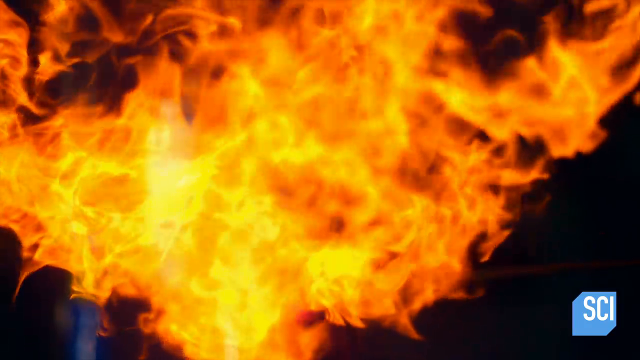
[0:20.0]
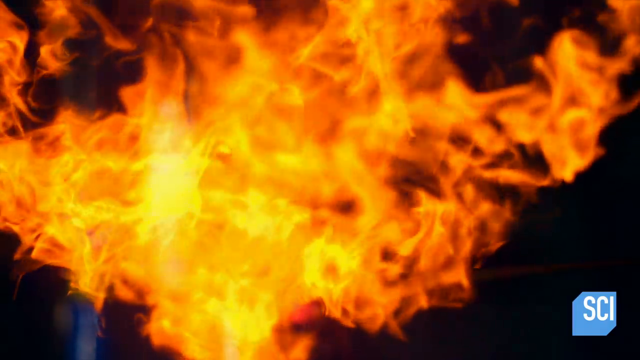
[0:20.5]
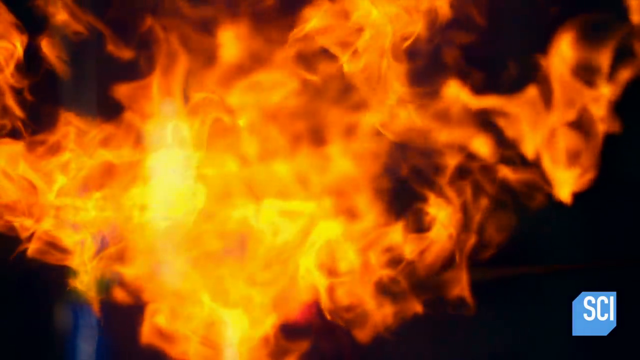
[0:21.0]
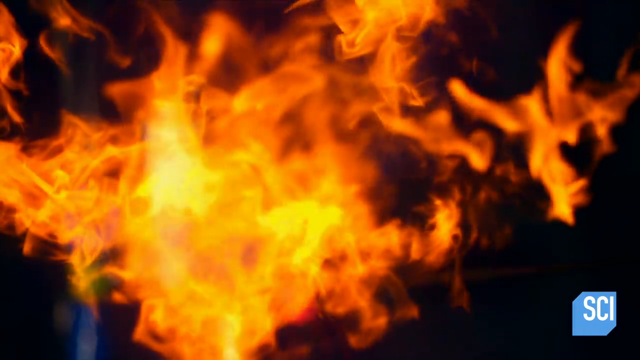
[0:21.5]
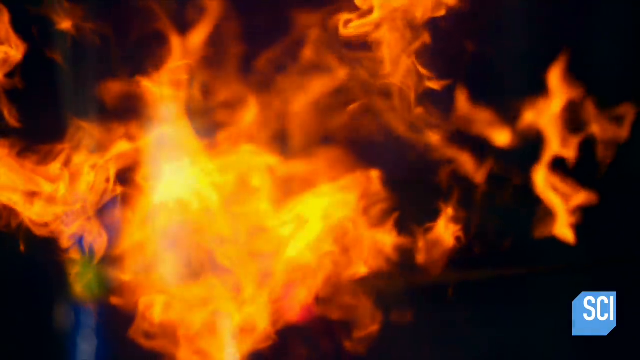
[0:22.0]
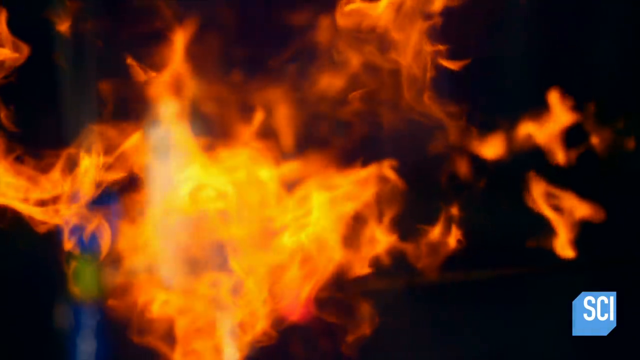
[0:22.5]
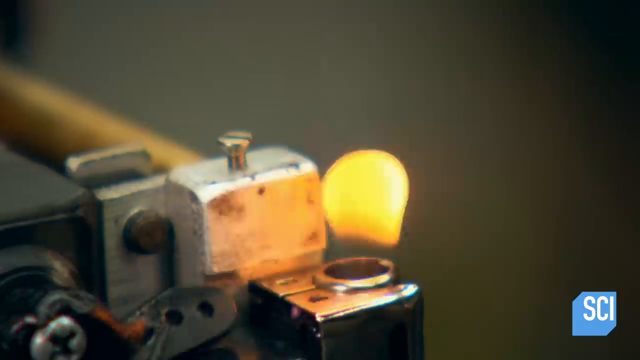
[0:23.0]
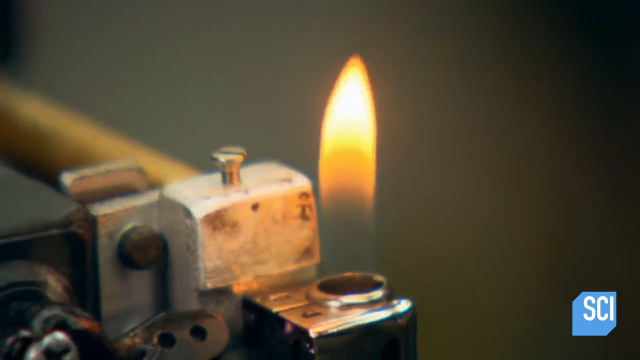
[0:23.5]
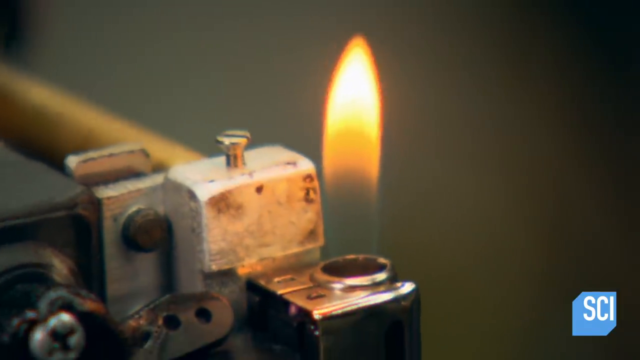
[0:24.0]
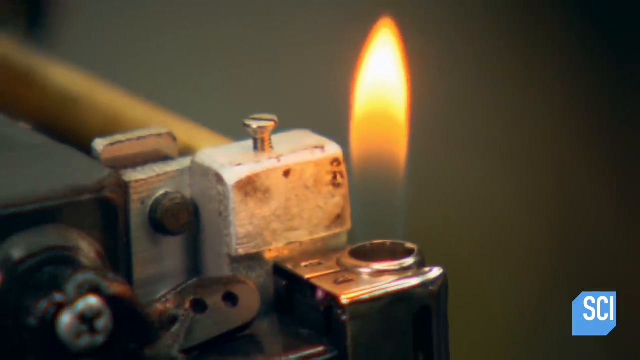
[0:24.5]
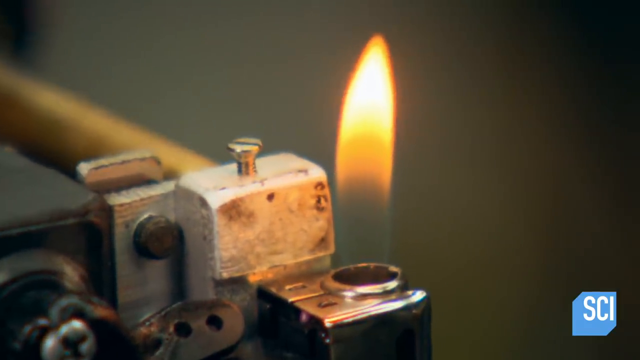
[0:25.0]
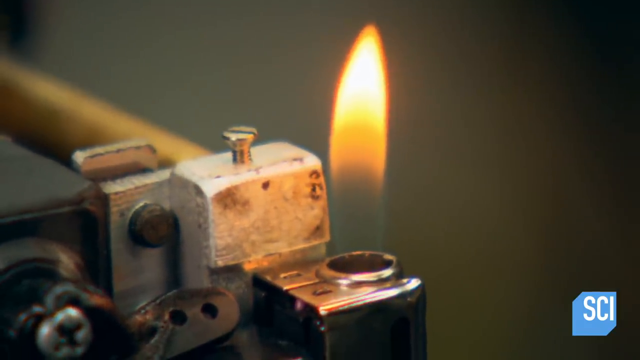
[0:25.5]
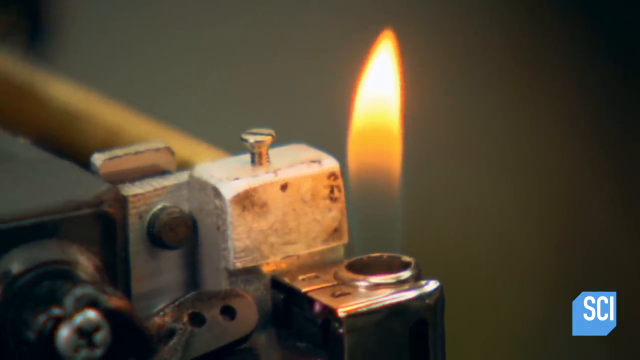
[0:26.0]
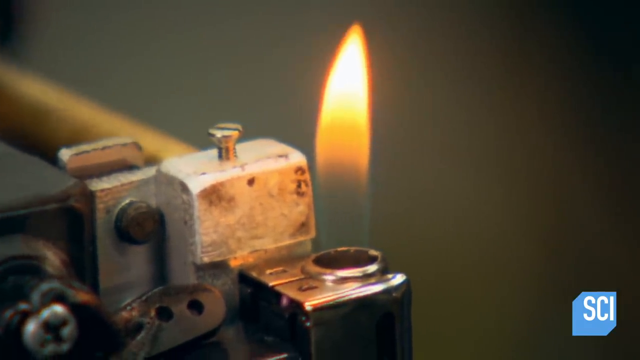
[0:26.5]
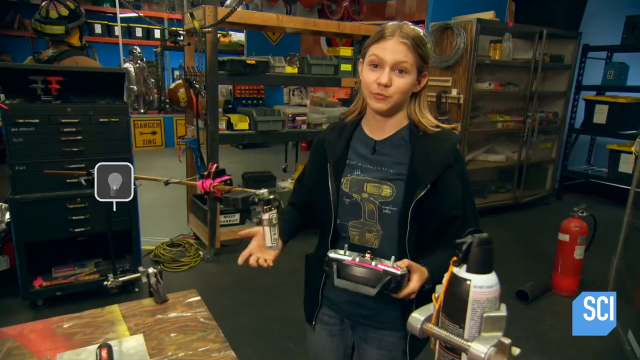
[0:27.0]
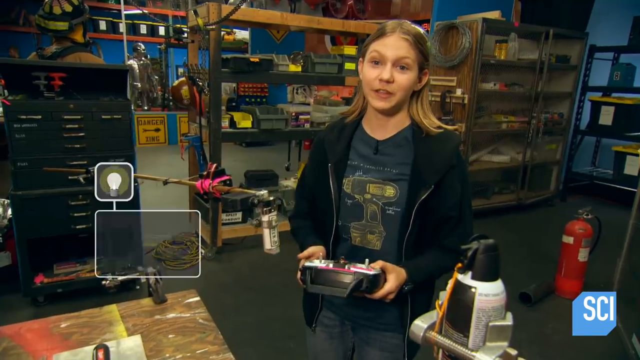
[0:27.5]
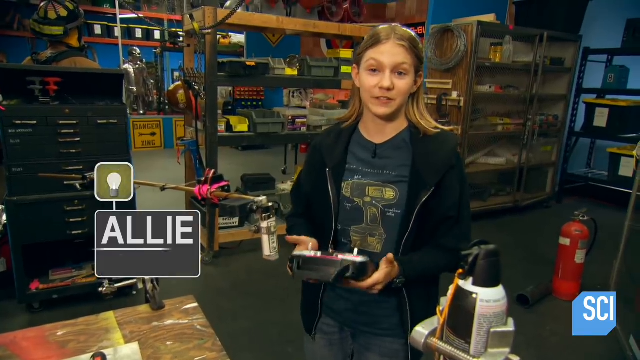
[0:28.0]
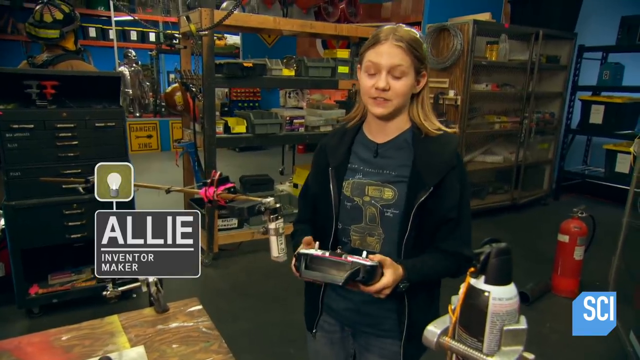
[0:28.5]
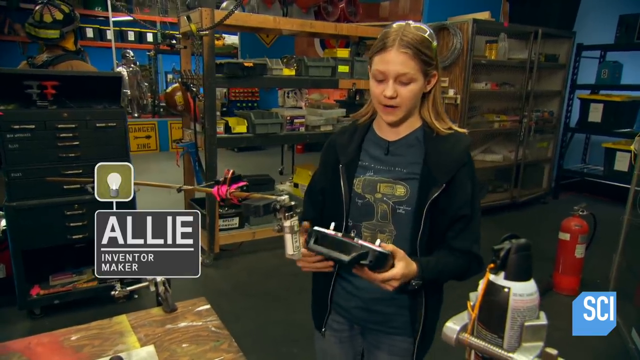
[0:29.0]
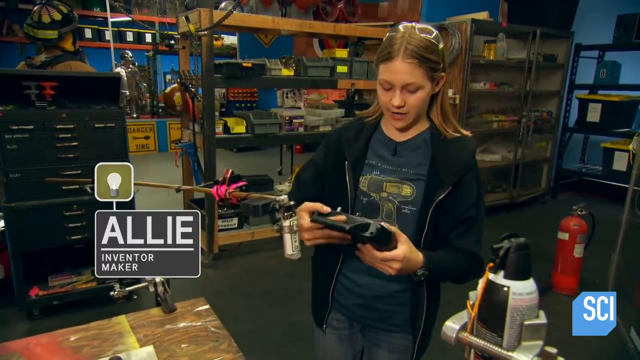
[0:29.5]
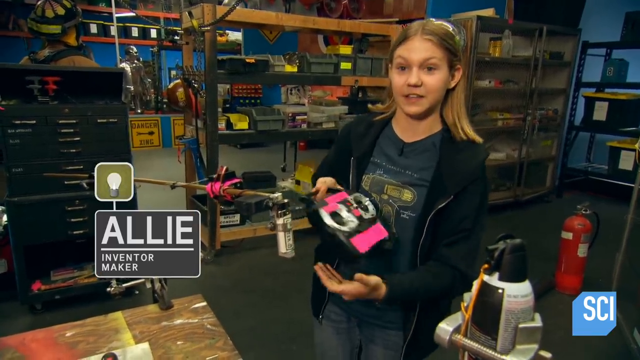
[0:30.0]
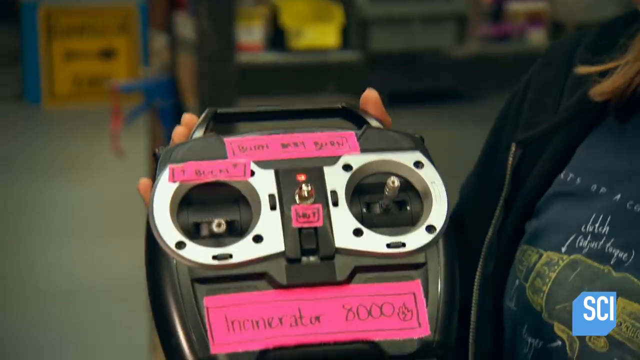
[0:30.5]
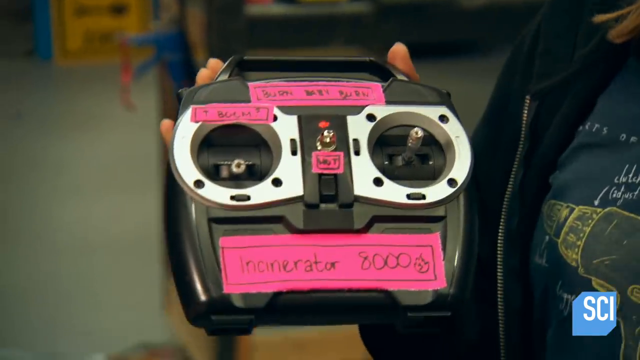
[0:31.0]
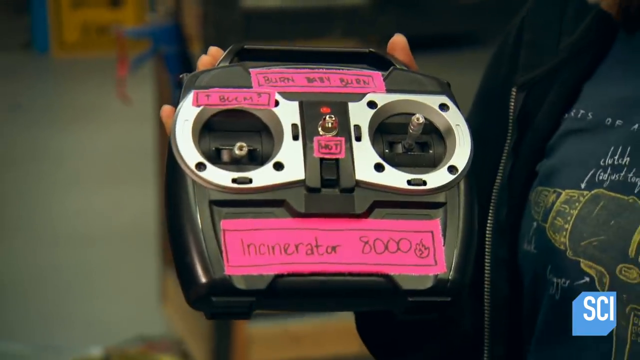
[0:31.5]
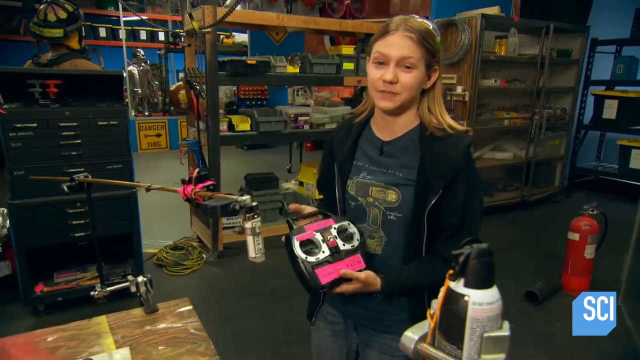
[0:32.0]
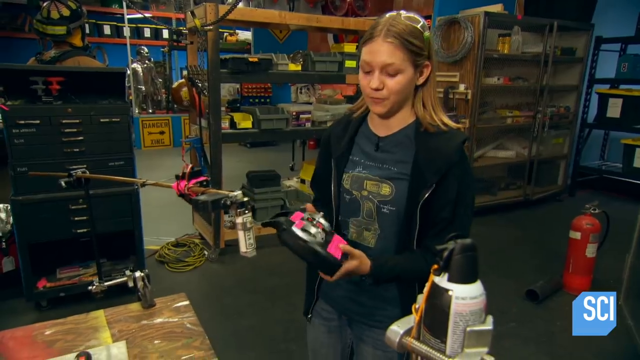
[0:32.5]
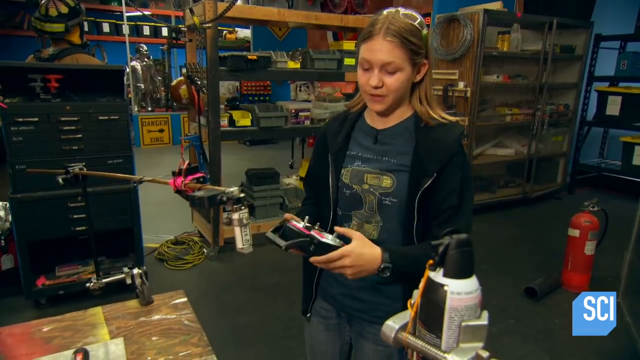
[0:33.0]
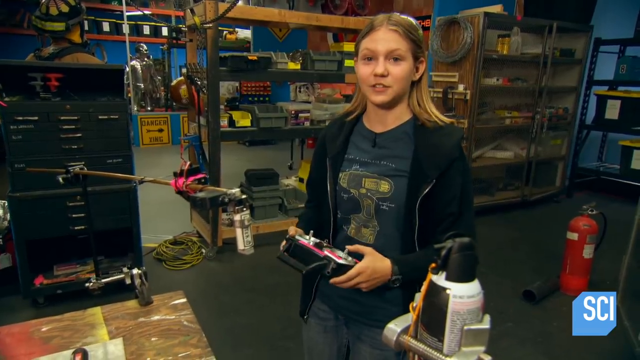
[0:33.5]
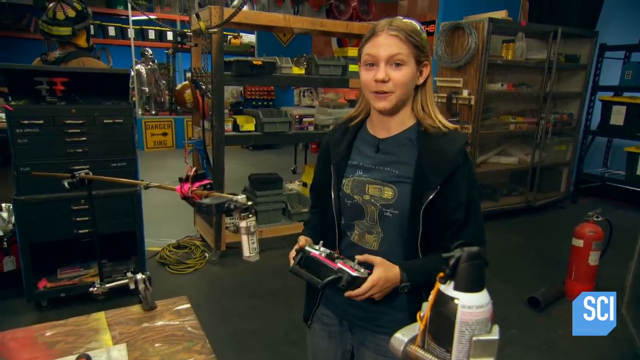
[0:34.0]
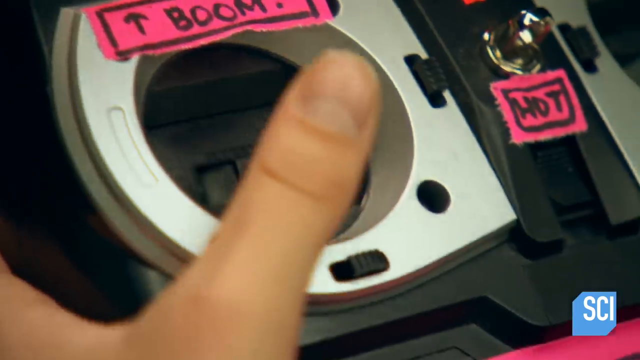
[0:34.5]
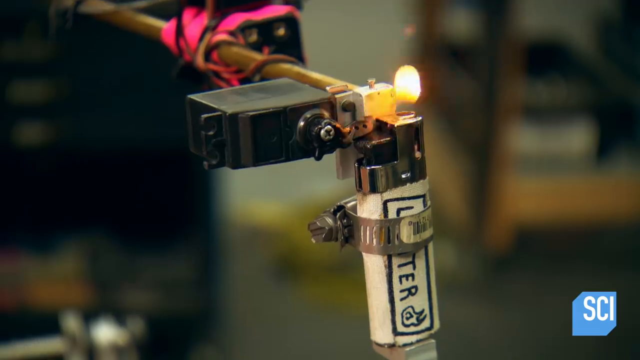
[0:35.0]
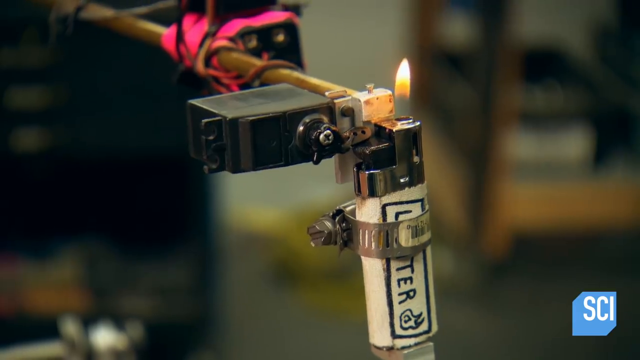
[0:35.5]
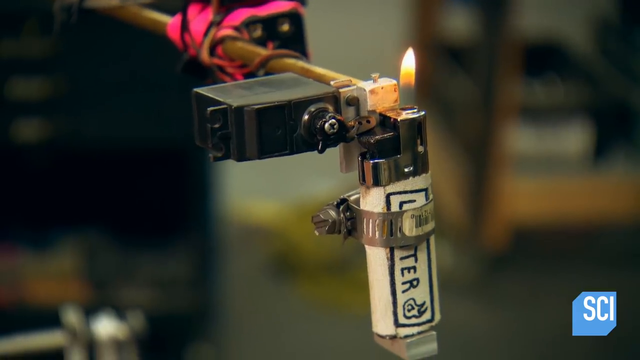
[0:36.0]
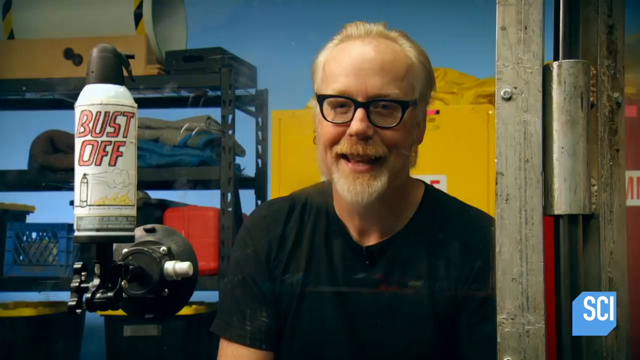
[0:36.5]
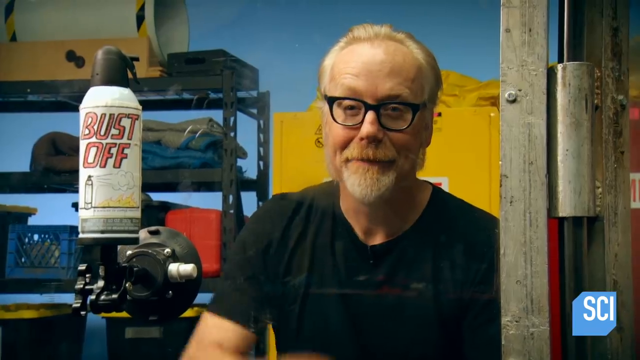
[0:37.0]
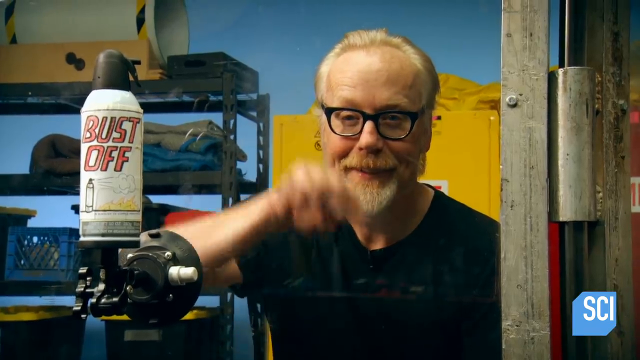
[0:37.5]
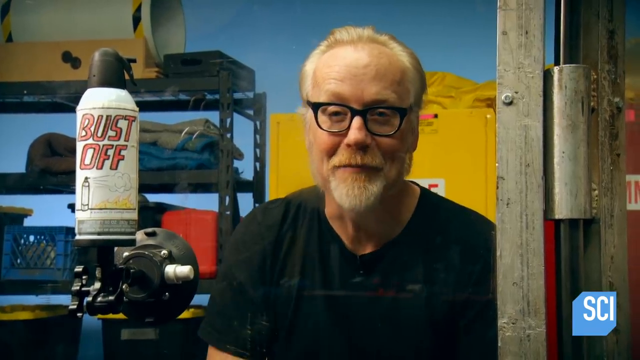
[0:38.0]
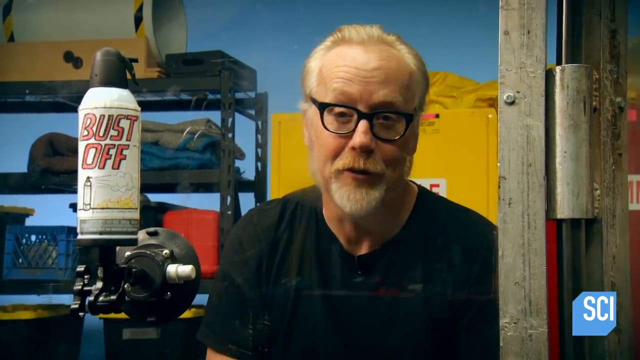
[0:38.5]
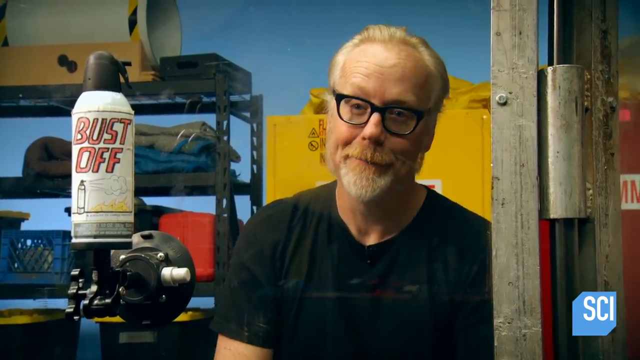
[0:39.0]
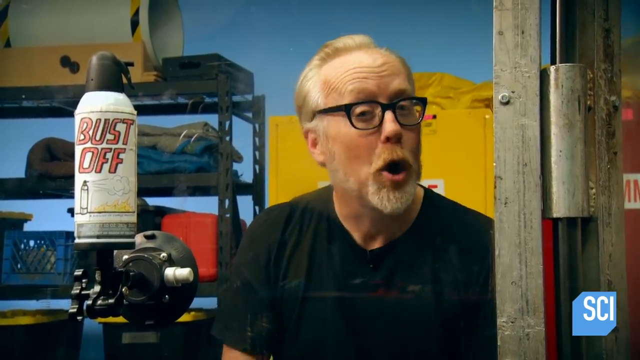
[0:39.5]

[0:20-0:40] A lighter is shown in connection with compressed air. A young girl demonstrates alongside an older man with gray hair and black glasses who has a bottle of Bust-Off. The man wears a short-sleeved shirt. The girl, named Allie, has a controller that looks like a game controller; it says "incinerator" and "boom" and shows an arrow pointing up.